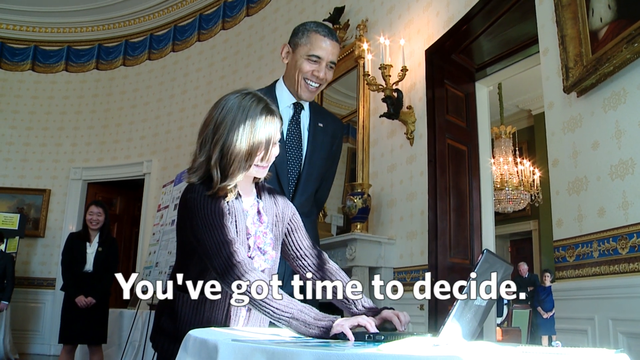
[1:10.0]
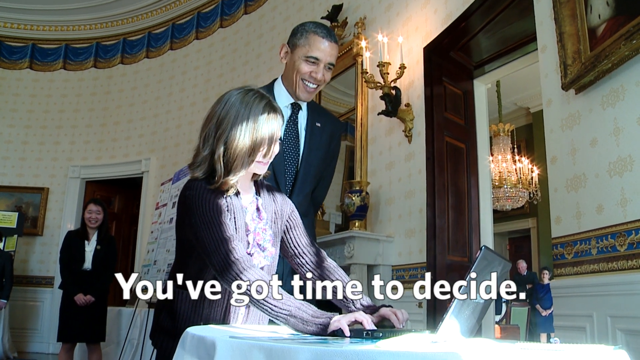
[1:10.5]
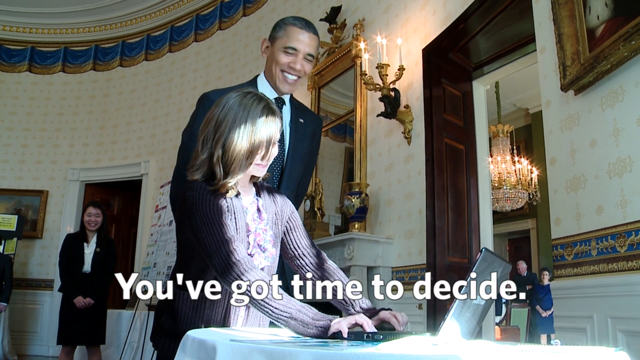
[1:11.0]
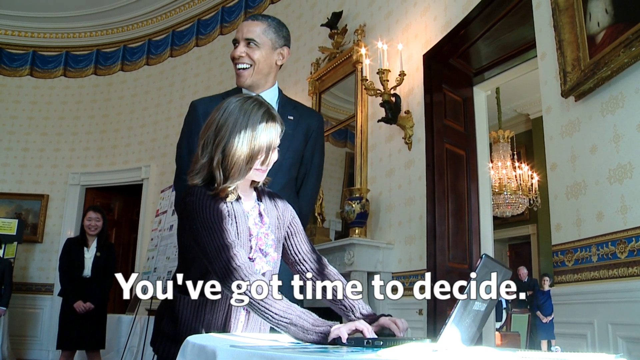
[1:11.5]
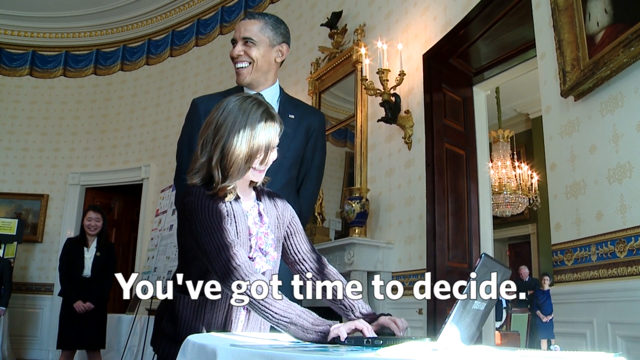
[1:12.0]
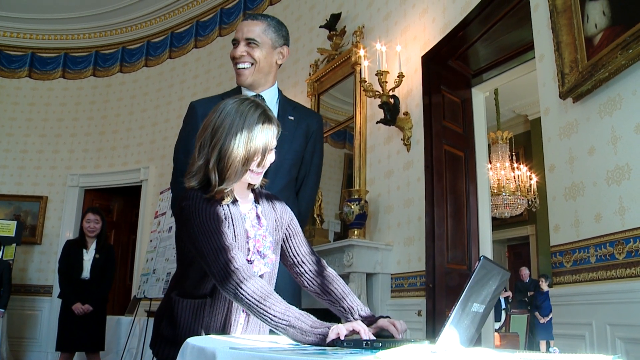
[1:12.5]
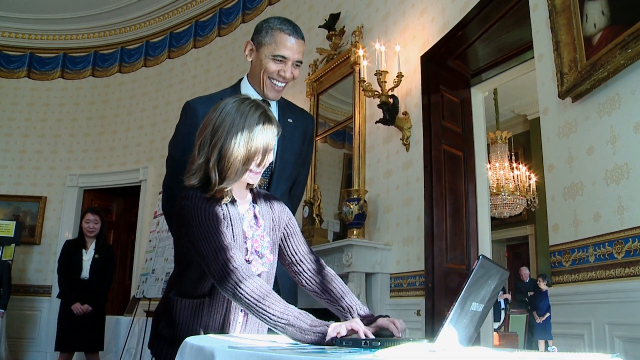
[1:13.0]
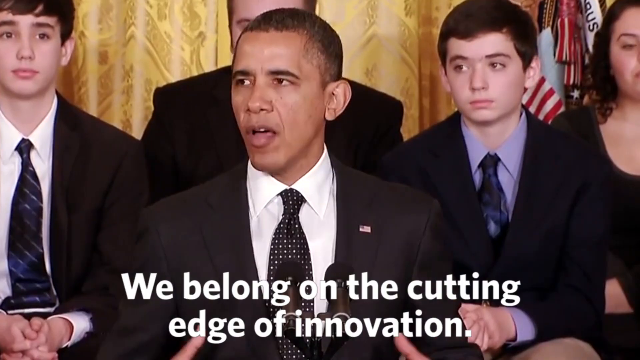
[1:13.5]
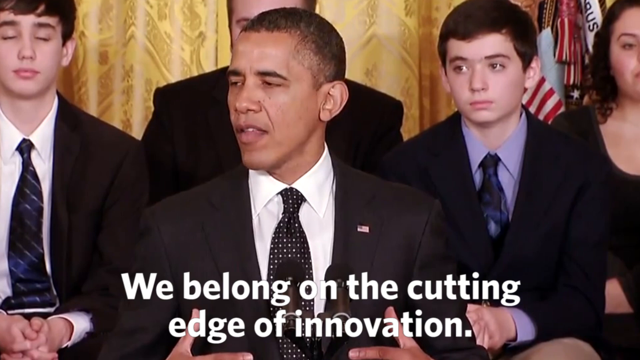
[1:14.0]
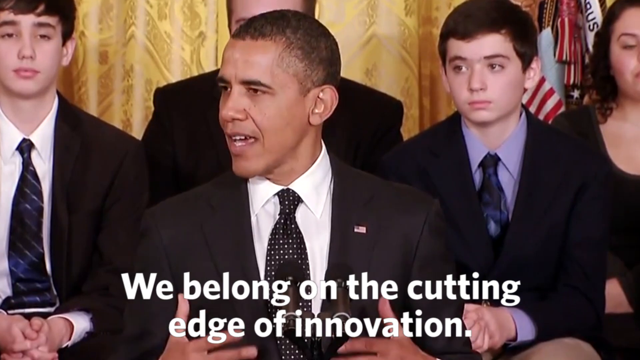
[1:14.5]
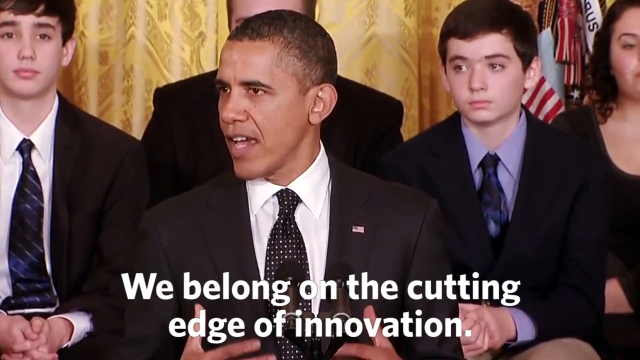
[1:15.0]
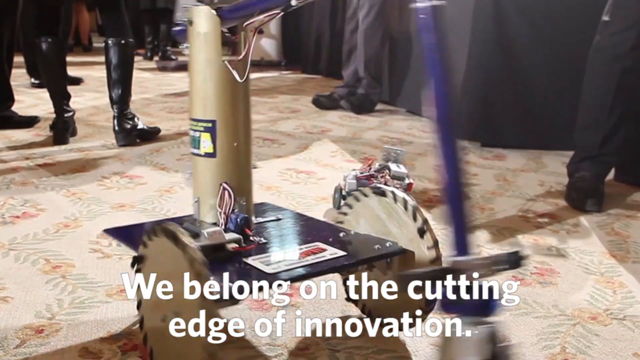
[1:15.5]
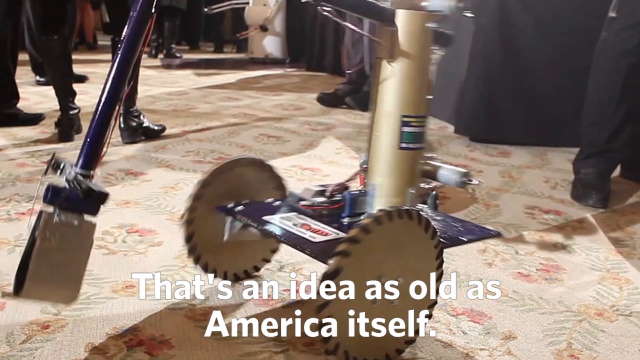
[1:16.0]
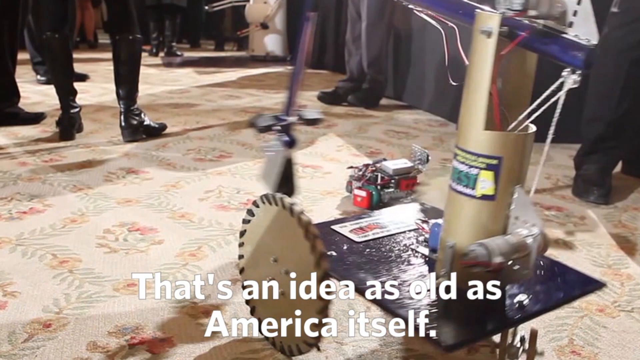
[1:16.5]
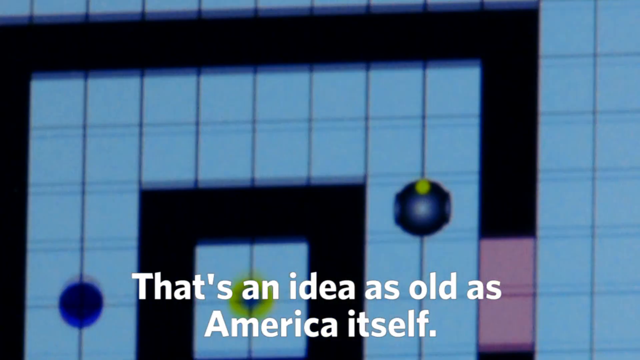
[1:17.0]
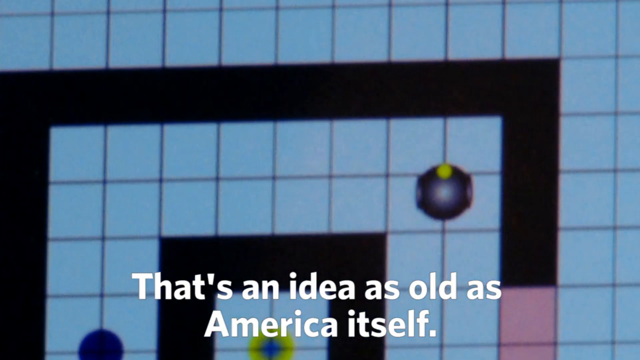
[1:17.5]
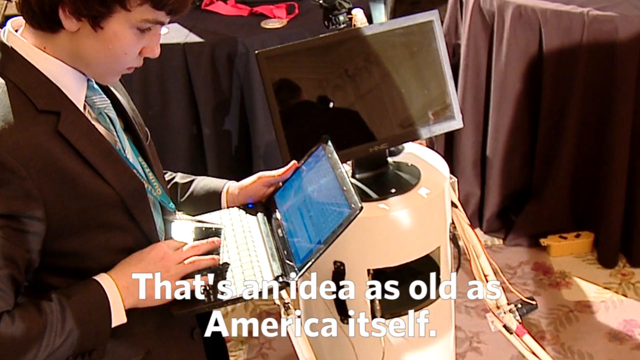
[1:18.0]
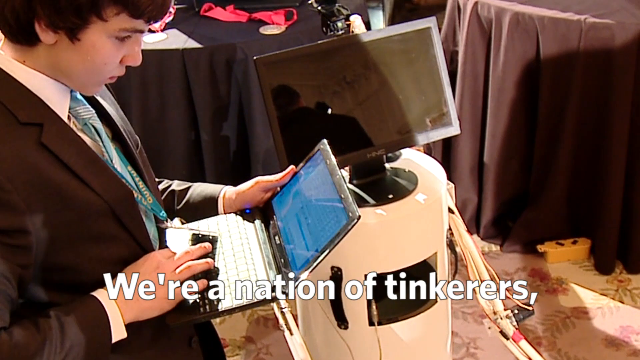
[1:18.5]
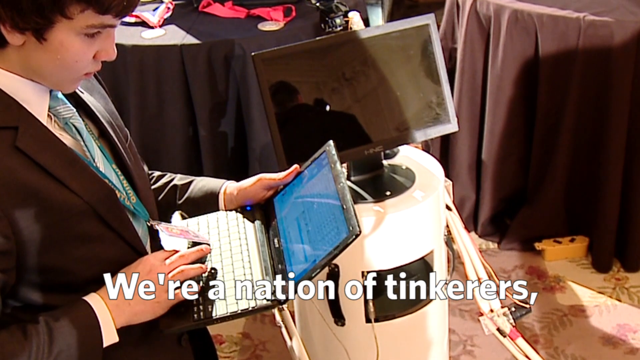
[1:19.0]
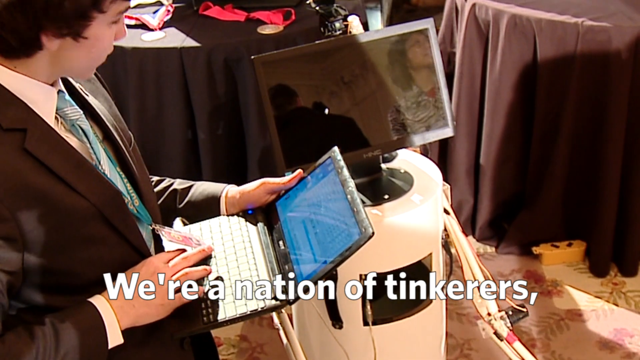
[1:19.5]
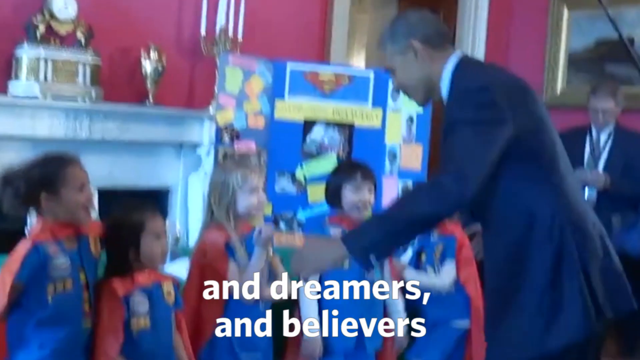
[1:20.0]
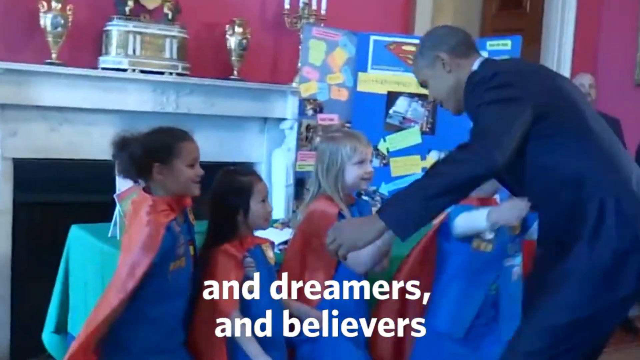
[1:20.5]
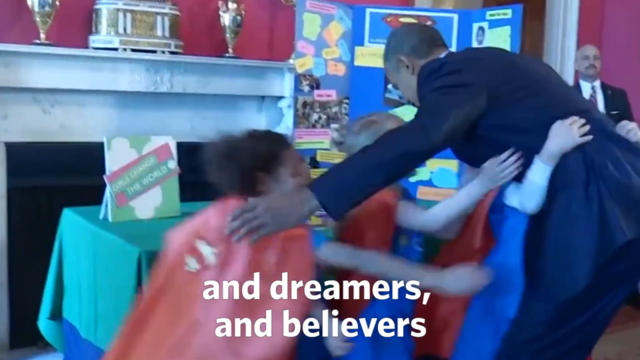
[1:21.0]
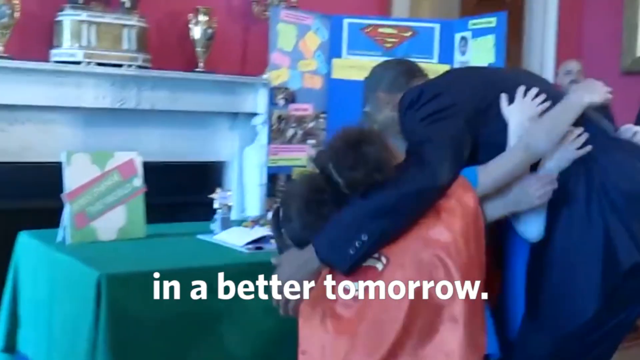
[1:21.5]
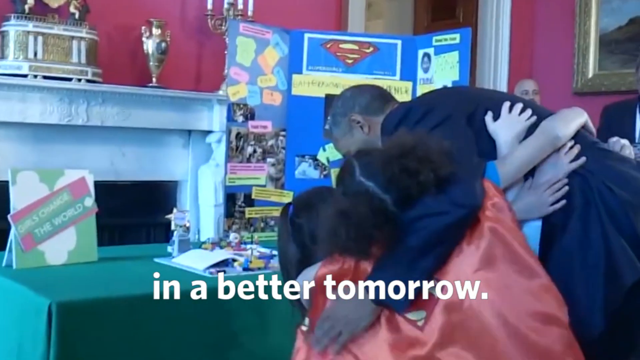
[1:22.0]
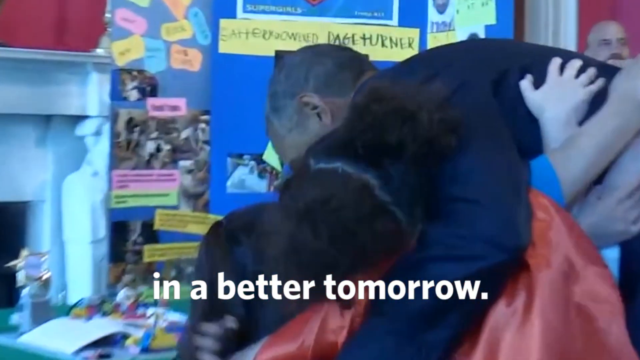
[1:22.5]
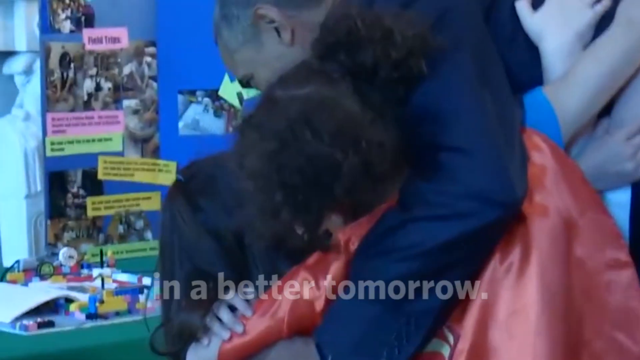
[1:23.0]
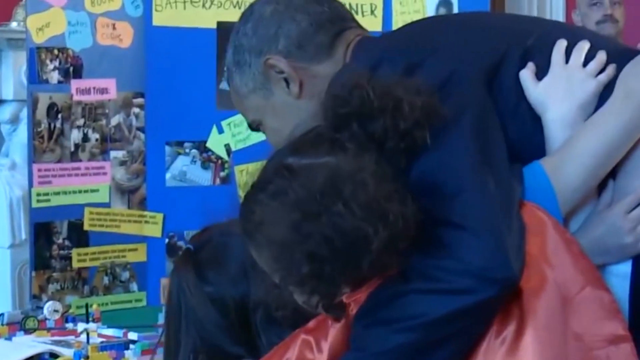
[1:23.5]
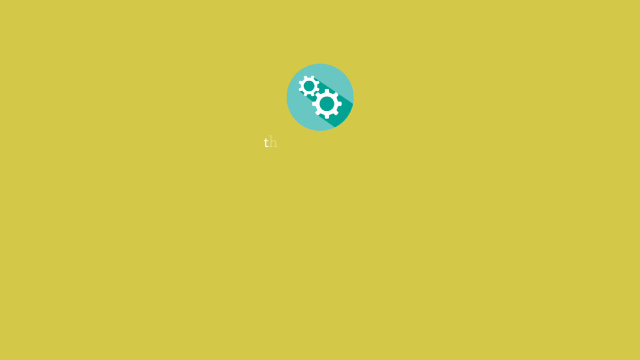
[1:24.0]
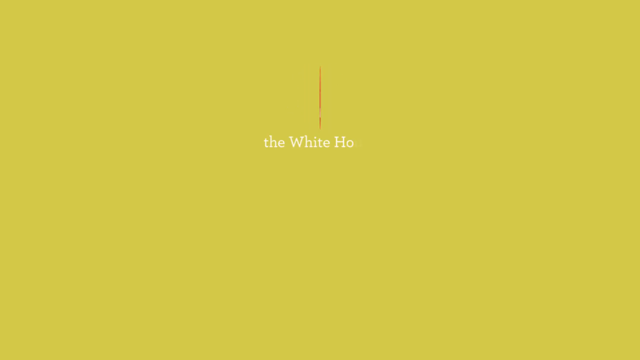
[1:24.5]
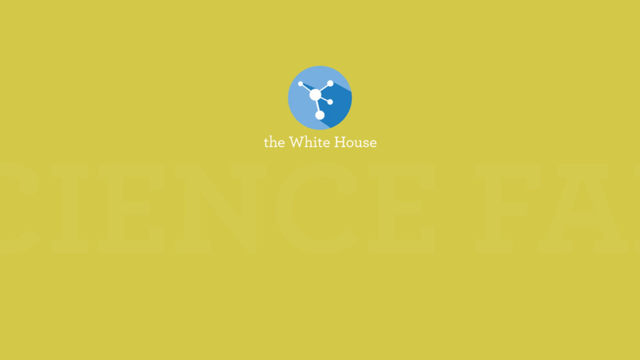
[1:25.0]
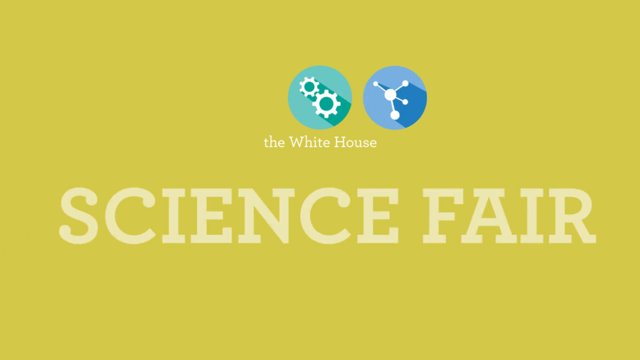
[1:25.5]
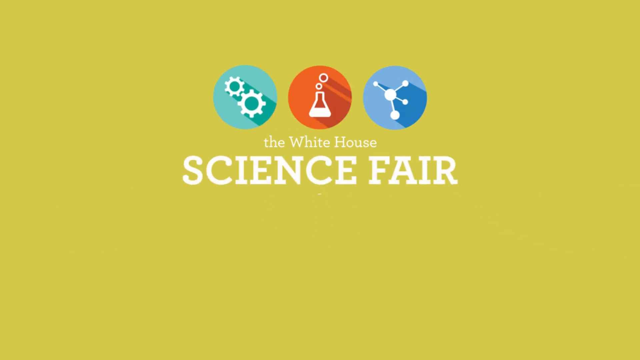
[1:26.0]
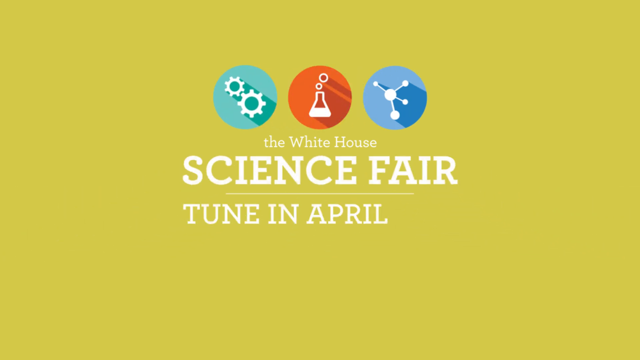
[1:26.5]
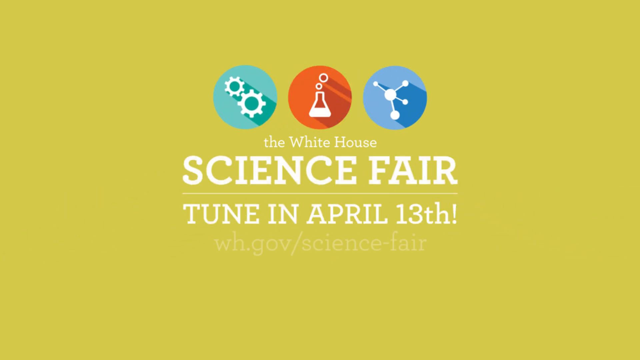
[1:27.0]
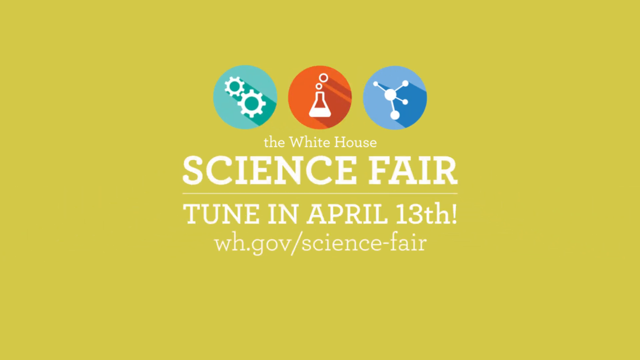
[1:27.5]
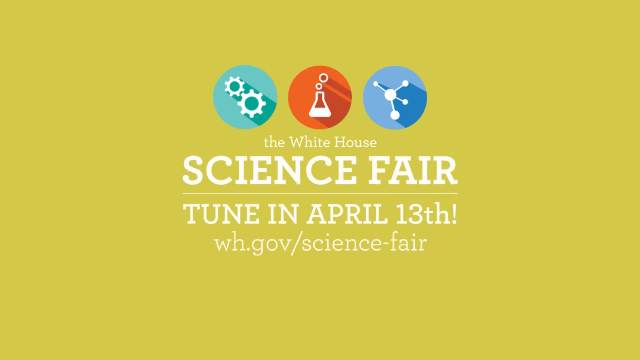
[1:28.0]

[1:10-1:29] Barack Obama is in the White House with students who have made different science fair projects. Some students stand behind him as he talks on TV, and they show some of their projects. A group of about five kindergarten to first grade students rush in and give the president a large hug, and he has to bend down very low to hug them because he is very tall and they are all very young. The video then cuts to a different area, where groups of students stand behind him for a TV appearance; only about four or five students are visible because the shot is zoned in on the president, but a whole group stands behind him. Different robotics that kids have invented, including talking robots, and various other science projects are also shown.